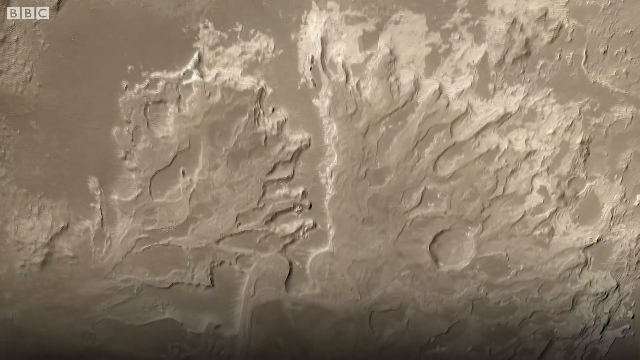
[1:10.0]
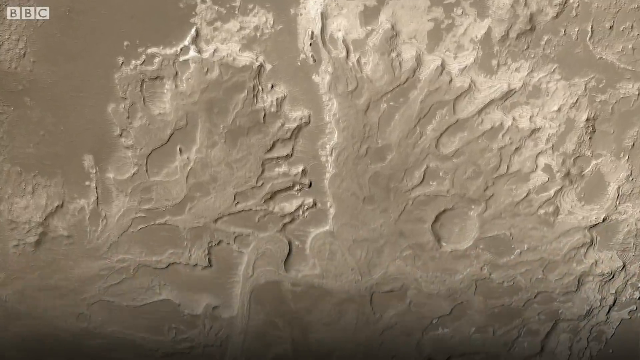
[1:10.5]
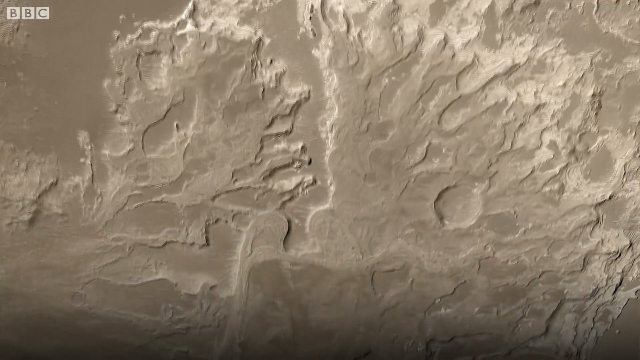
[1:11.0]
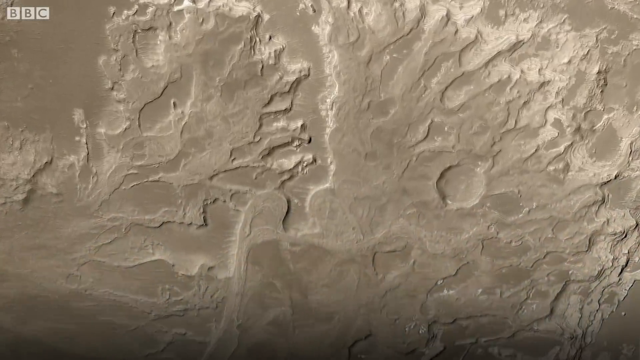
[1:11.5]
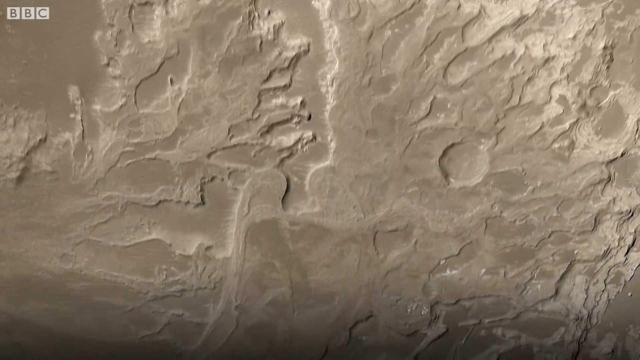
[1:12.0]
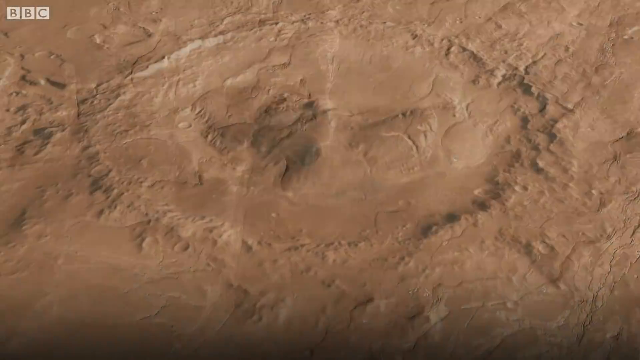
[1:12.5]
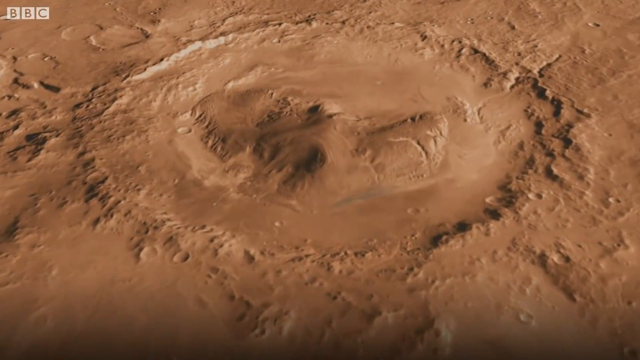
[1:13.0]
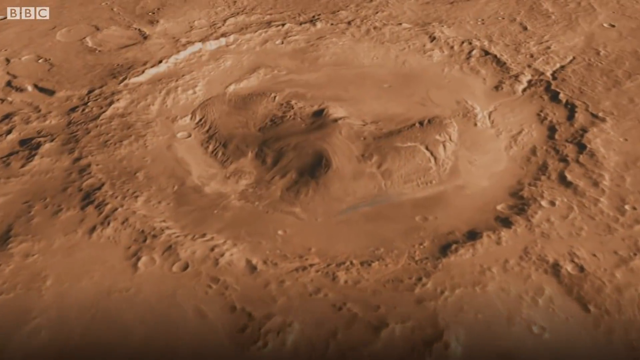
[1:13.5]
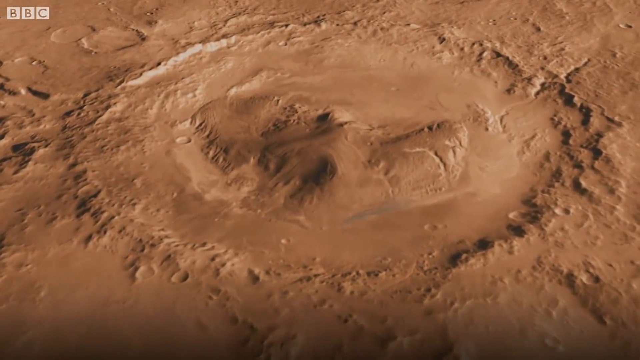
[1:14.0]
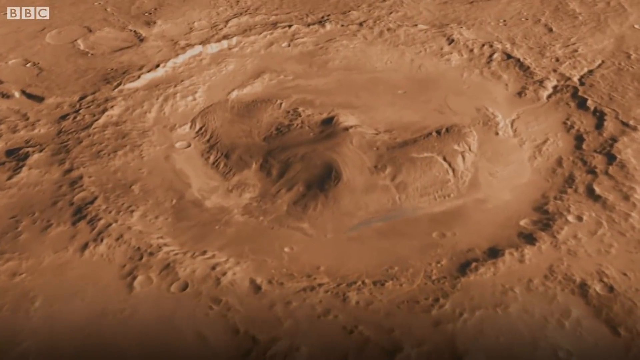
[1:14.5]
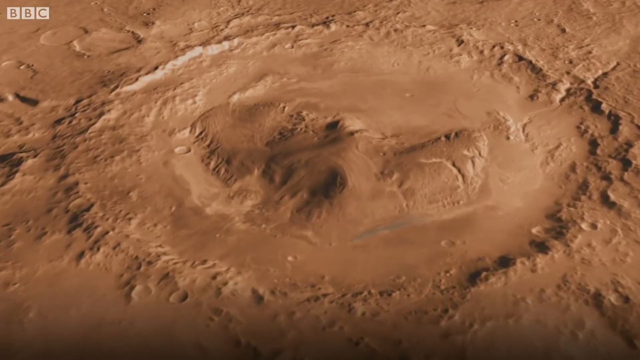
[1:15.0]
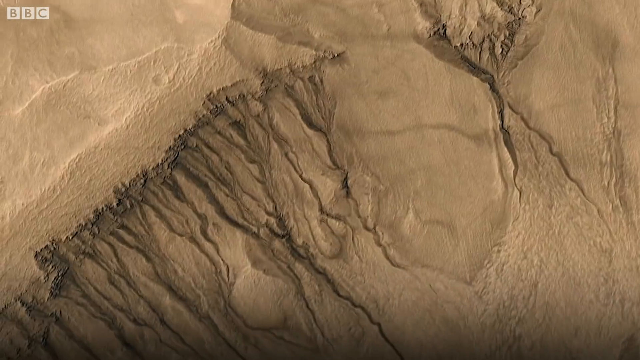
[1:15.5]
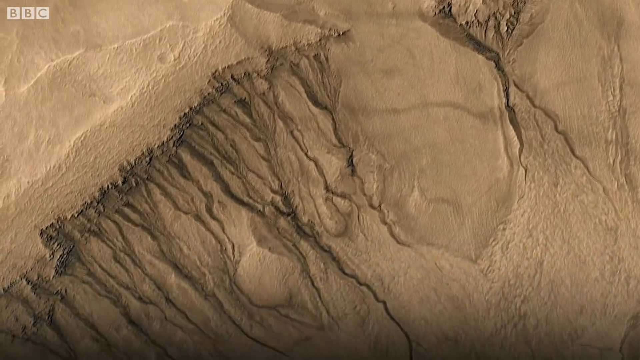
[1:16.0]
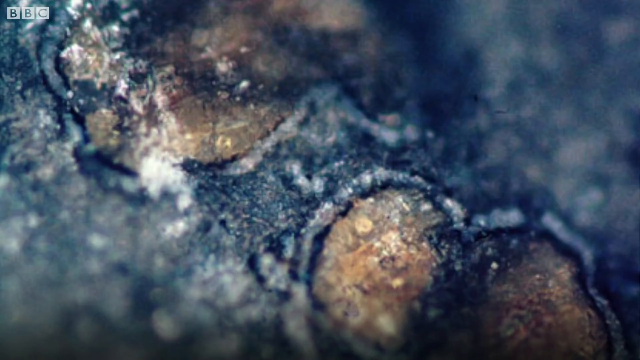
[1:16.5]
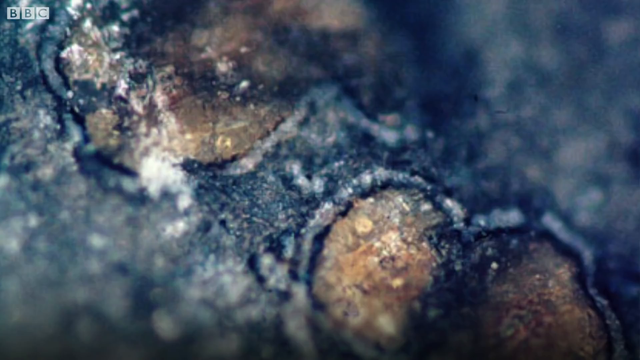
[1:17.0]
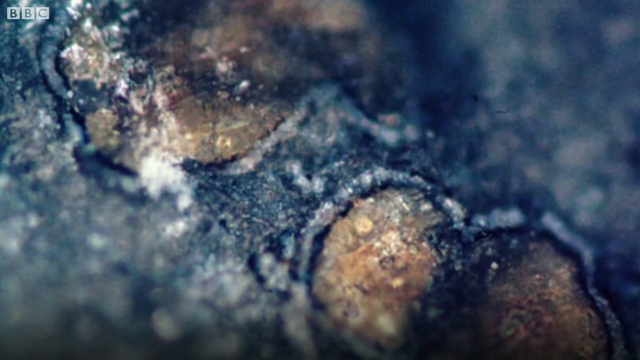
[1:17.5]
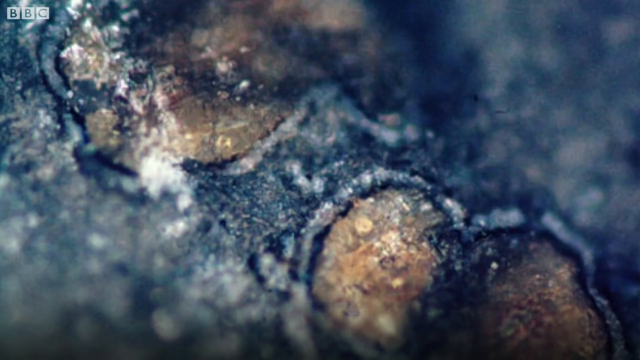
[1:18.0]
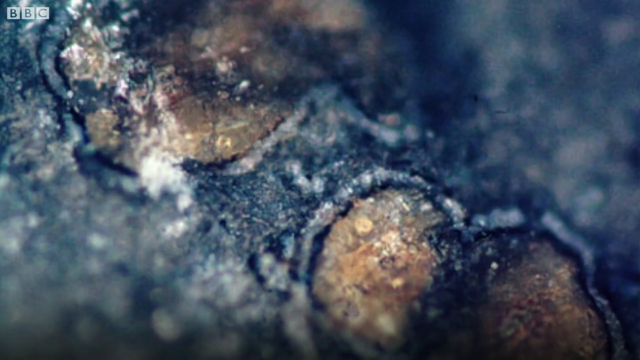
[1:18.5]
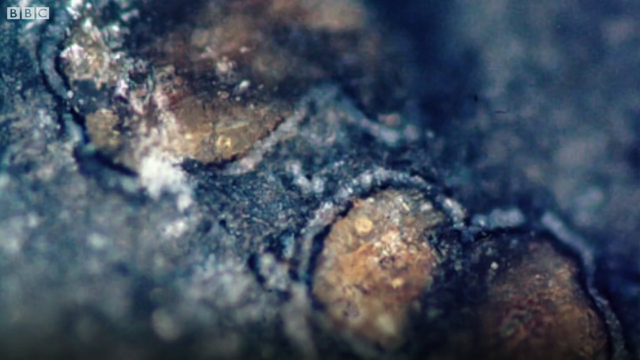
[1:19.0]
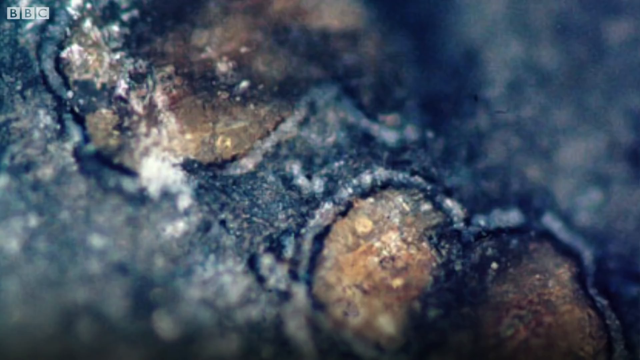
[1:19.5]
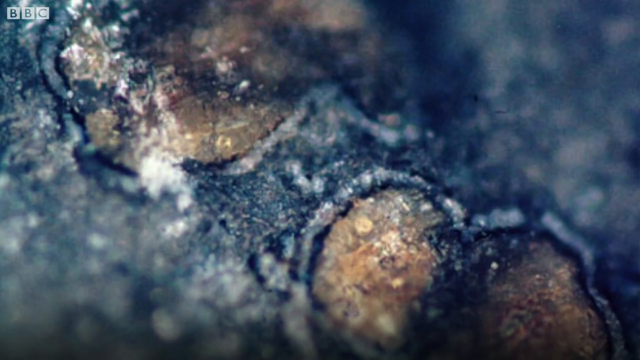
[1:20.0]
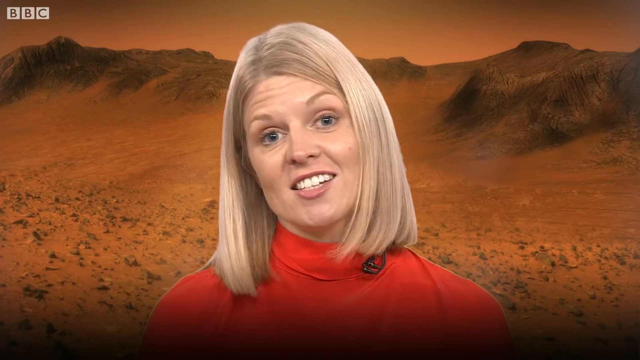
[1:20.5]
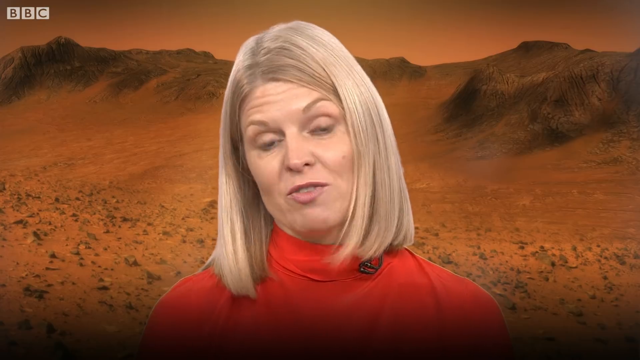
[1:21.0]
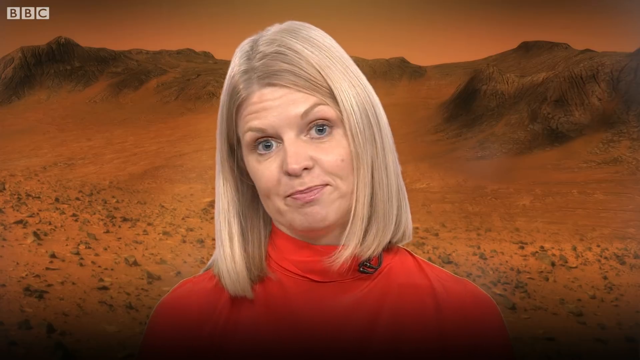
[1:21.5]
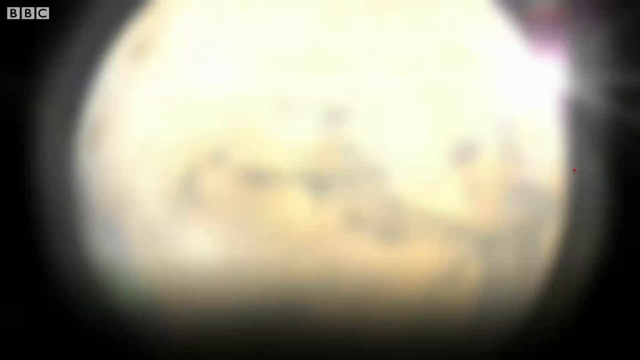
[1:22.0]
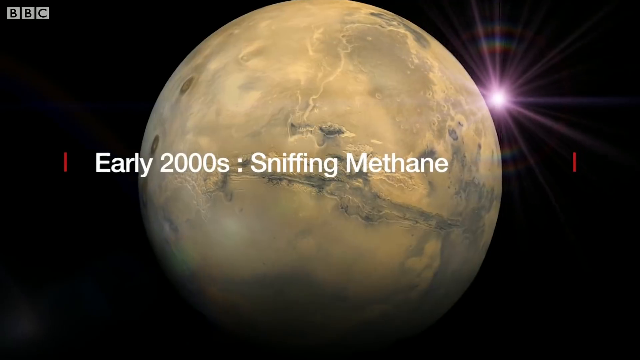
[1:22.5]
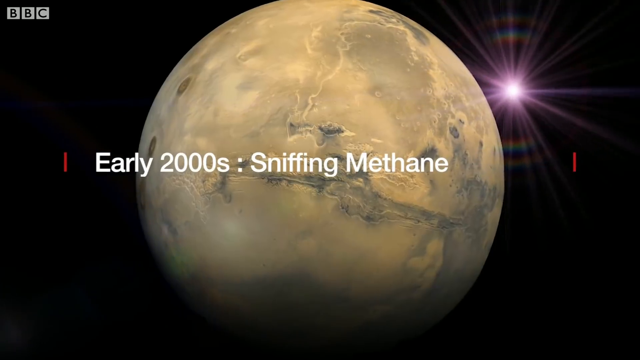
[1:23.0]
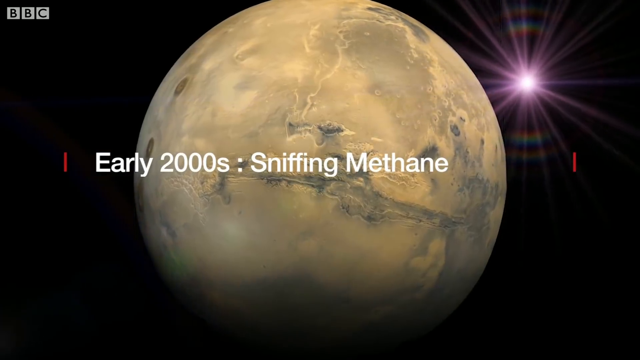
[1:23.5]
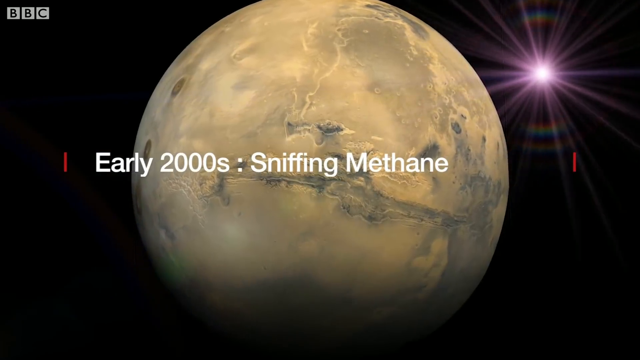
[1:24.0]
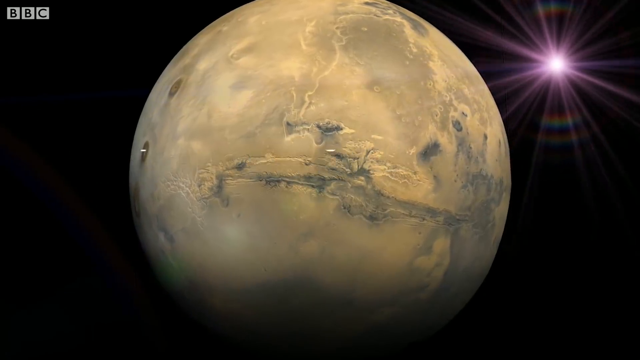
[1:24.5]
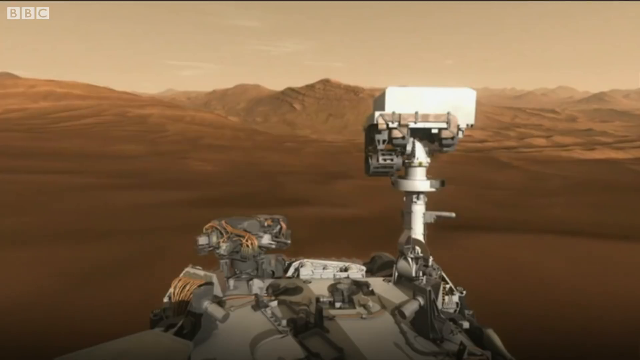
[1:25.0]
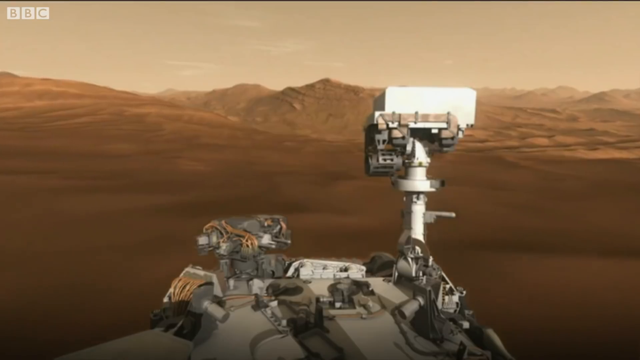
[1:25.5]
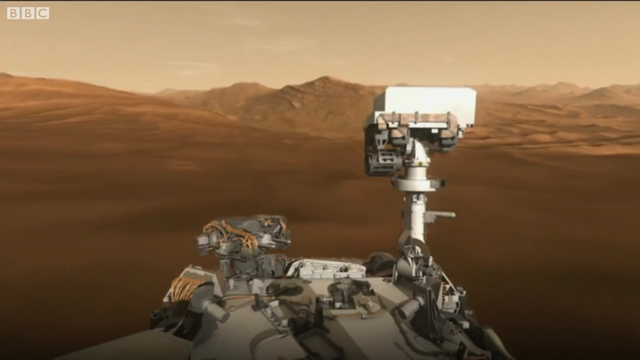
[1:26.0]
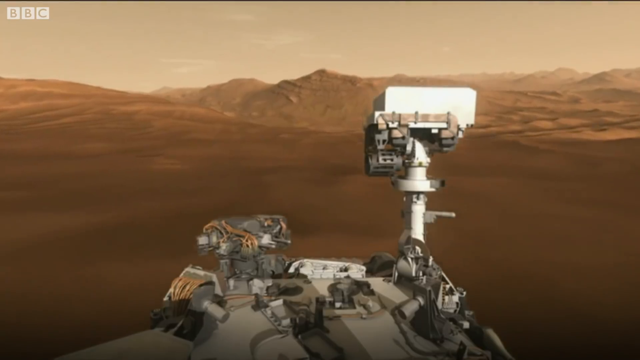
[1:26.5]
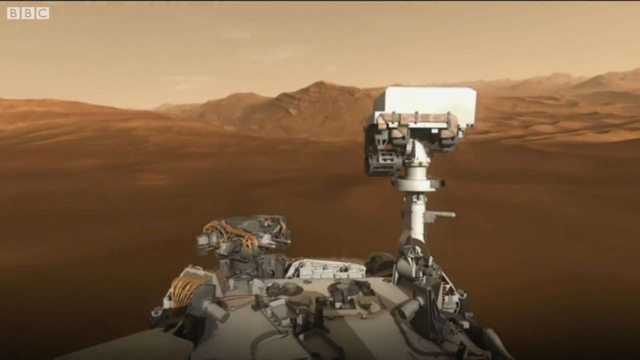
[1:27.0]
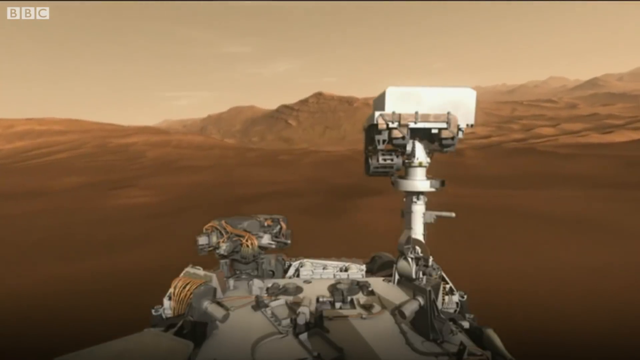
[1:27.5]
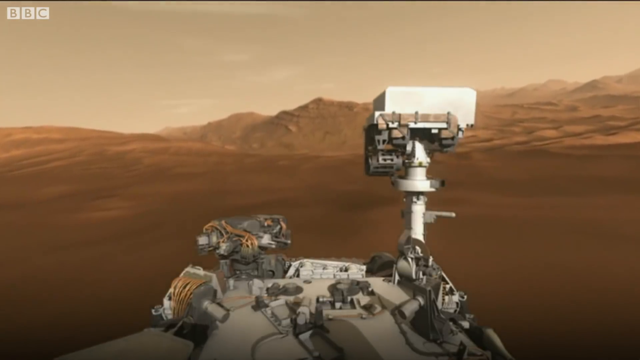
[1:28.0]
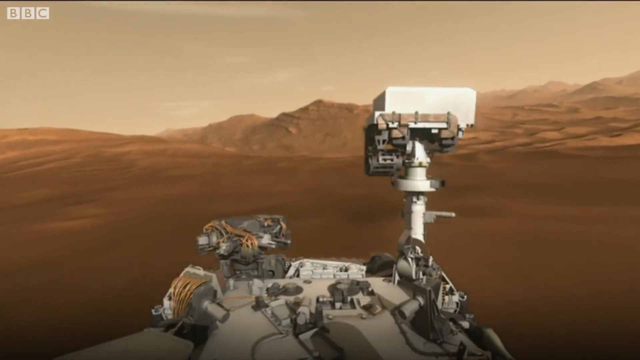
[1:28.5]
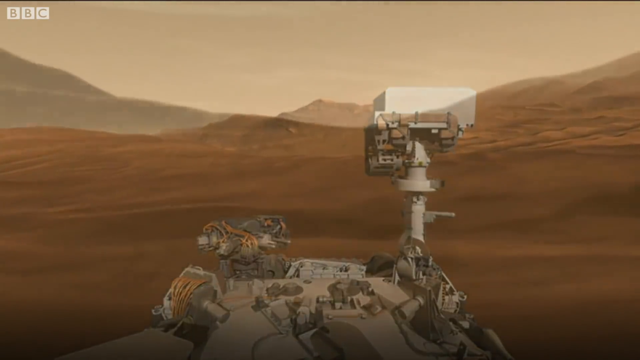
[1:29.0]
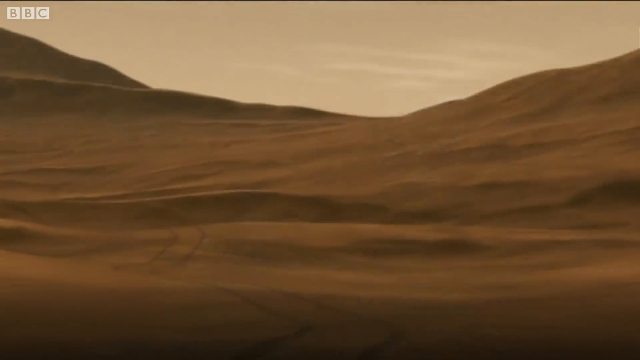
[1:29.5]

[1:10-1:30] An Earth-like planet is seen, with the view zooming in slowly and then out. A rocky-like background is captured. A news presenter appears, a white woman with long white hair in a red robe, with a microphone attached somewhere near the top of it. She stands in a desert-like setting with flat ground and some hills in the far distance. As she talks, an Earth-like planet appears with the text "early 2000s" and "sniffing methane". A complex robotic-like object appears, holding something white on its top. It moves across a dusty background that looks like a desert, and keeps moving as the camera zooms in on the desert and zooms out. The object is a satellite.